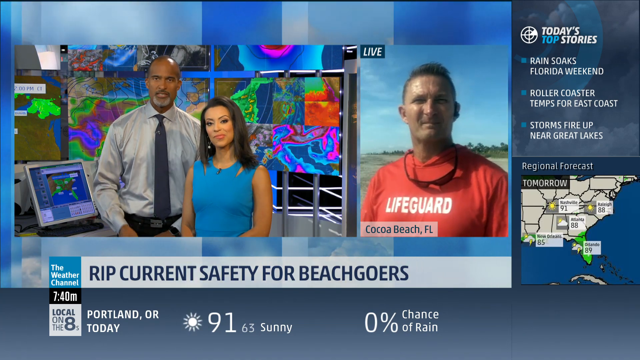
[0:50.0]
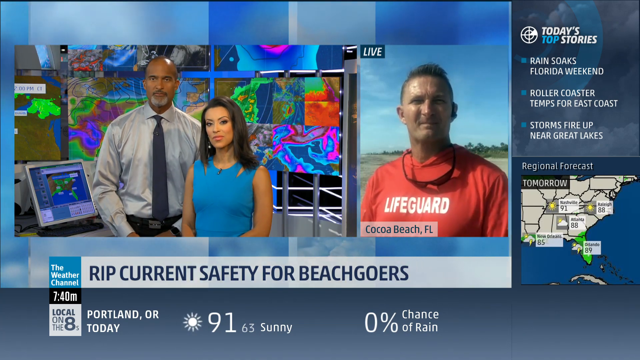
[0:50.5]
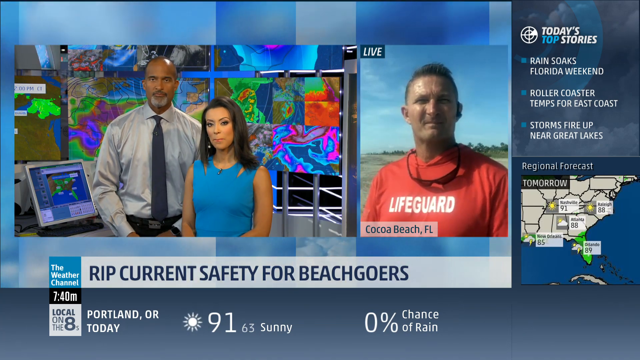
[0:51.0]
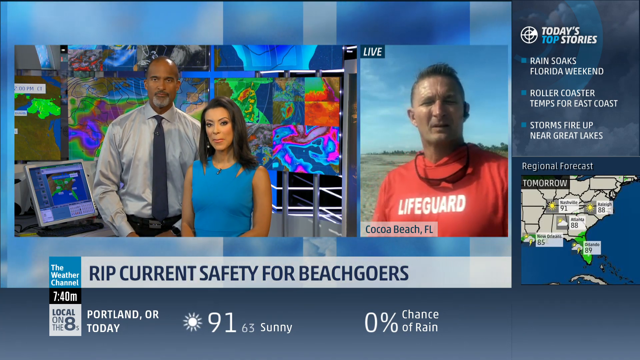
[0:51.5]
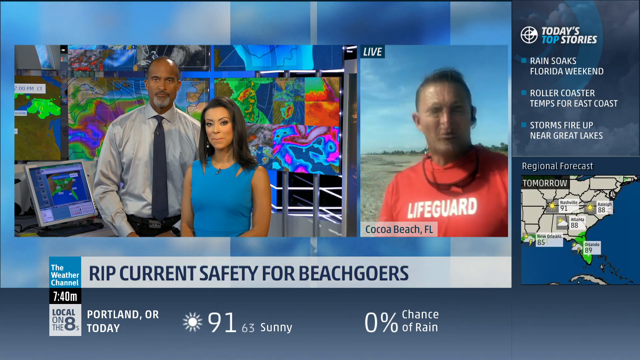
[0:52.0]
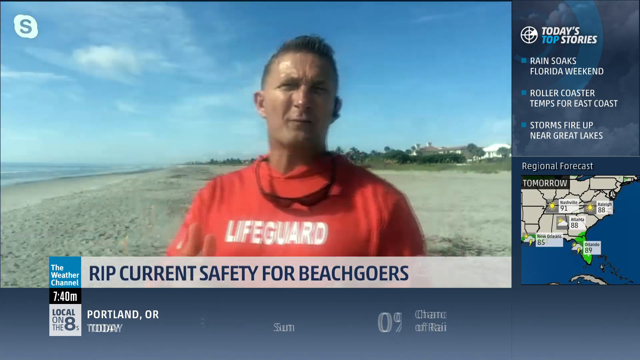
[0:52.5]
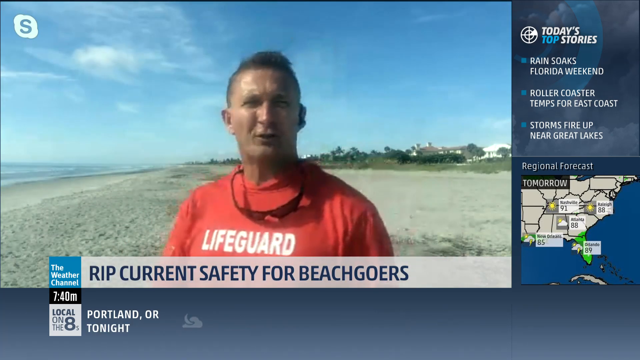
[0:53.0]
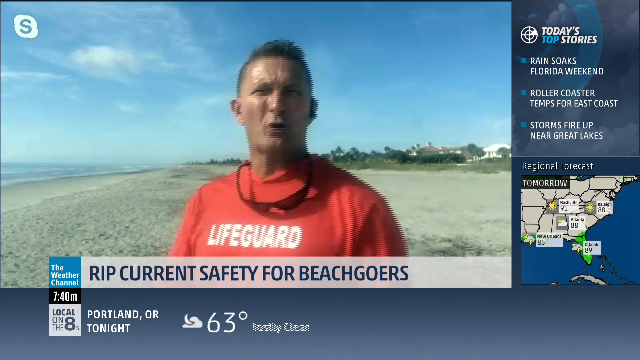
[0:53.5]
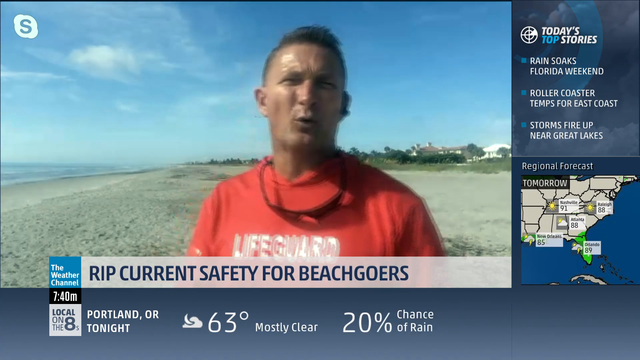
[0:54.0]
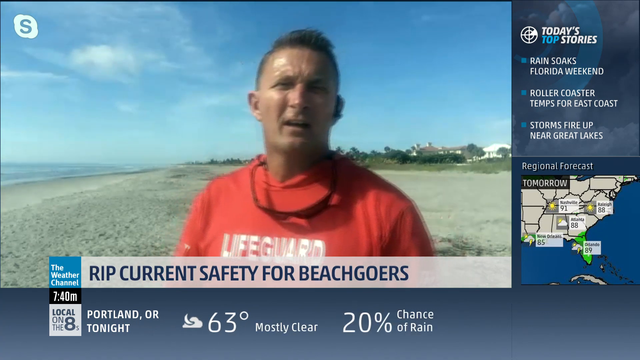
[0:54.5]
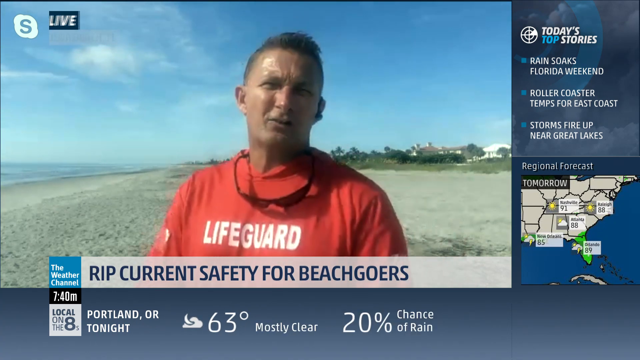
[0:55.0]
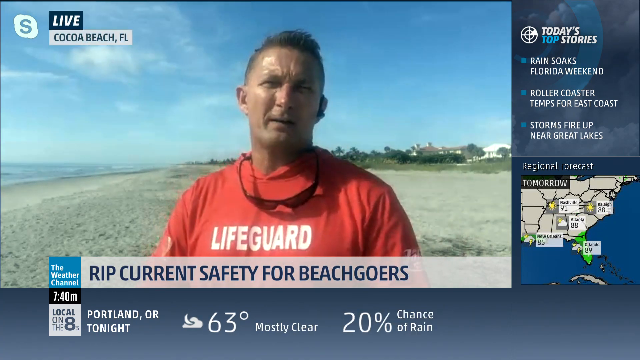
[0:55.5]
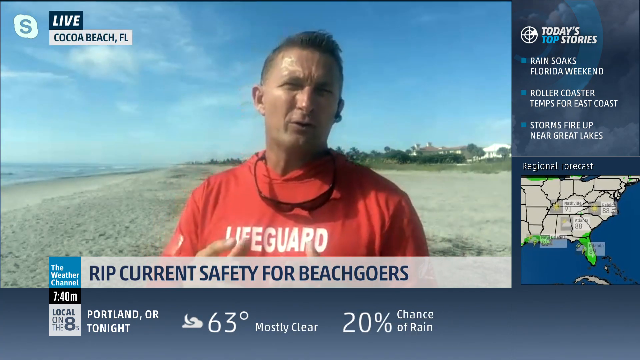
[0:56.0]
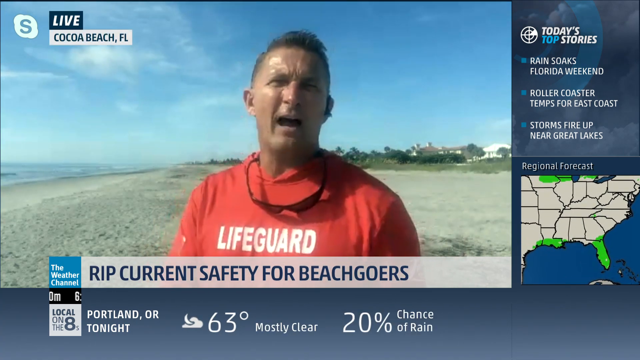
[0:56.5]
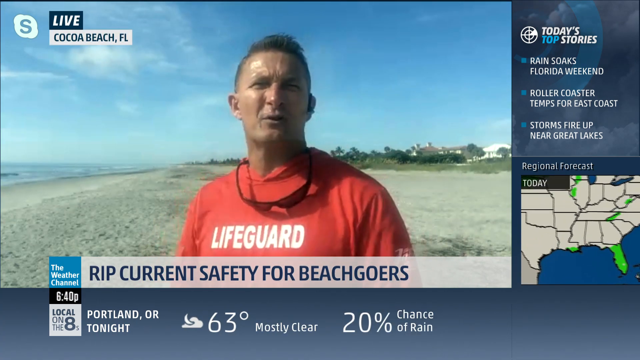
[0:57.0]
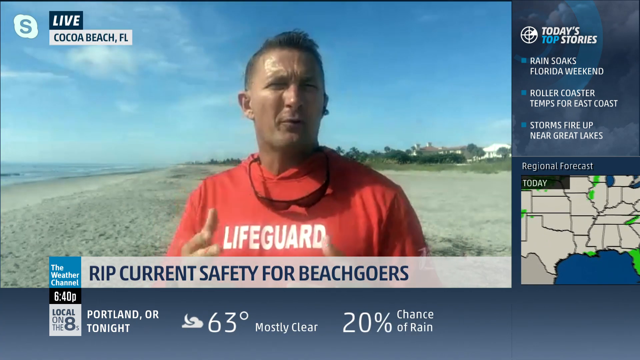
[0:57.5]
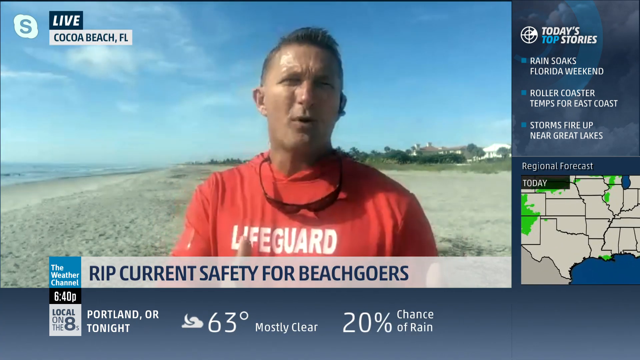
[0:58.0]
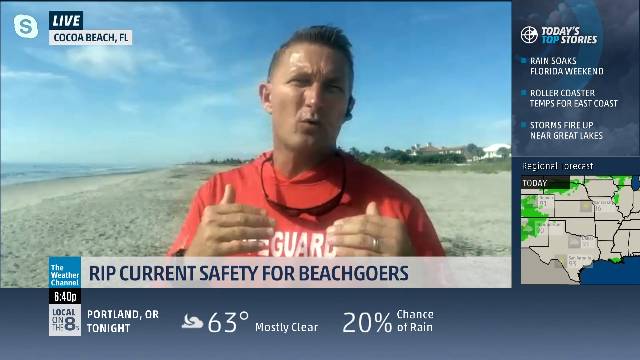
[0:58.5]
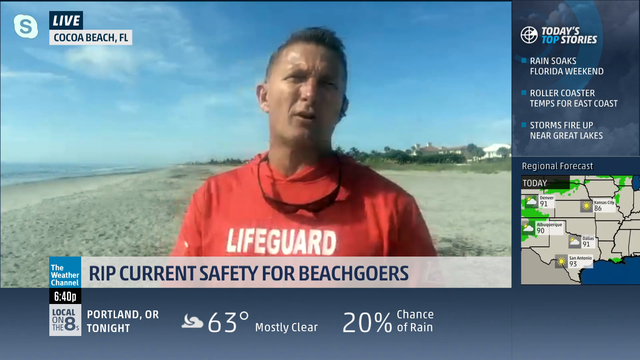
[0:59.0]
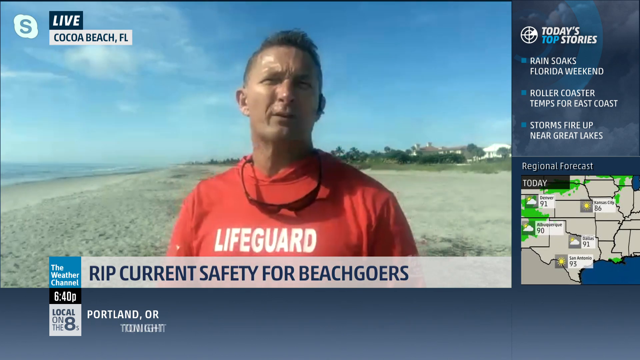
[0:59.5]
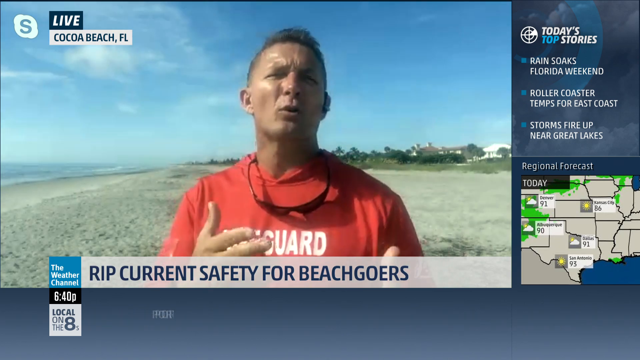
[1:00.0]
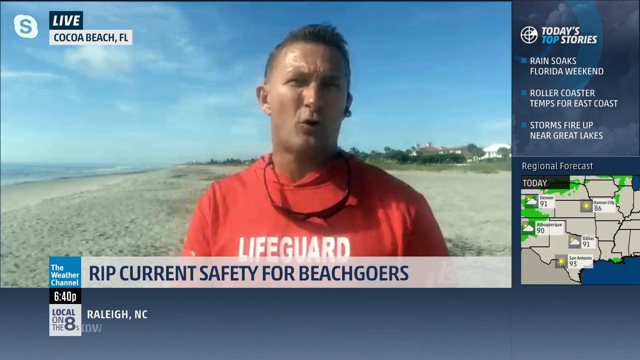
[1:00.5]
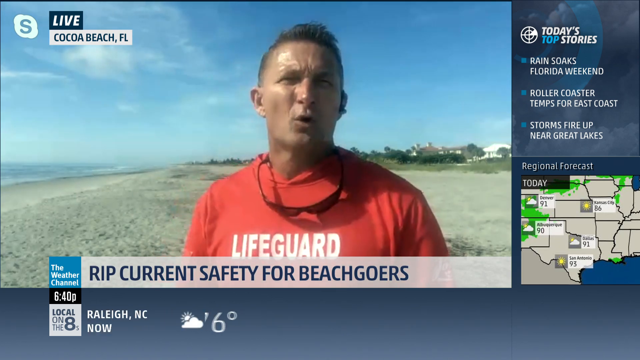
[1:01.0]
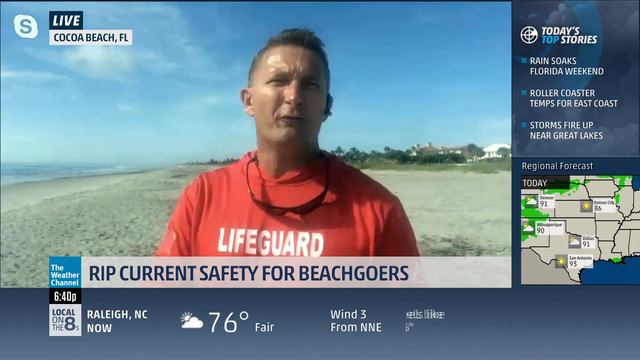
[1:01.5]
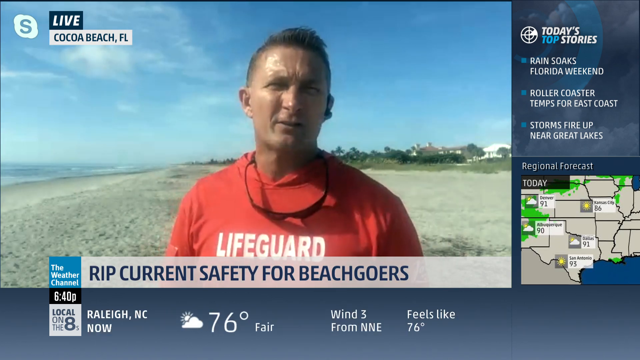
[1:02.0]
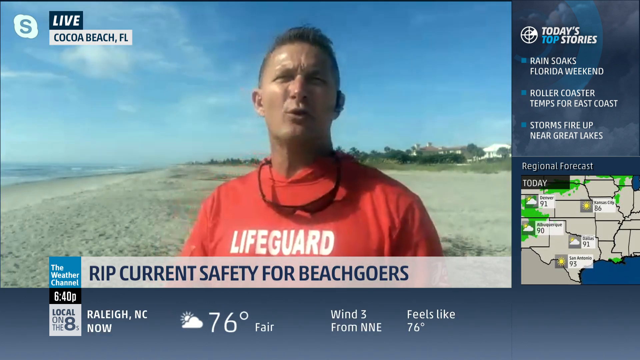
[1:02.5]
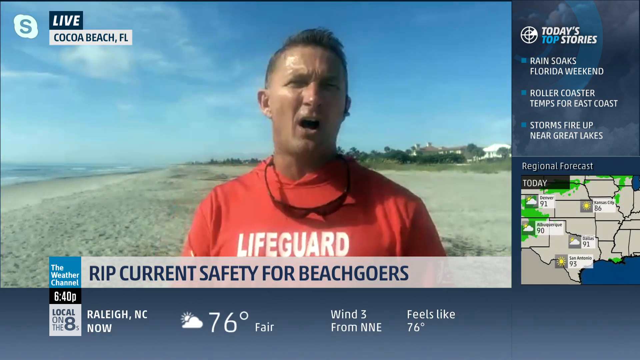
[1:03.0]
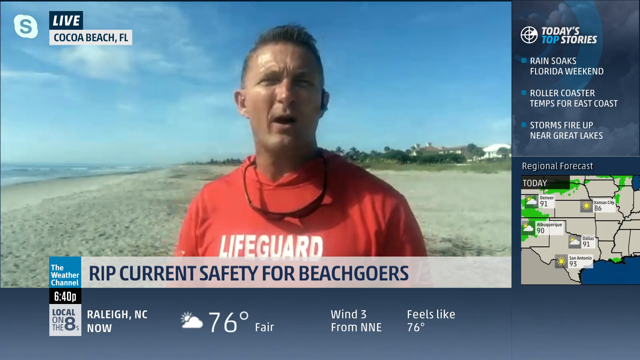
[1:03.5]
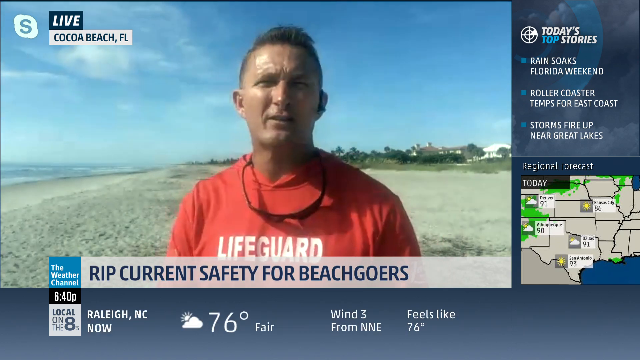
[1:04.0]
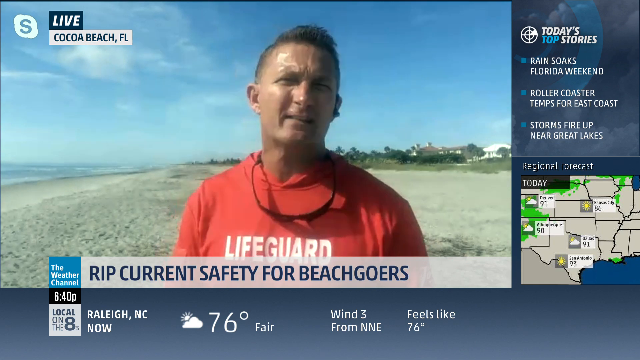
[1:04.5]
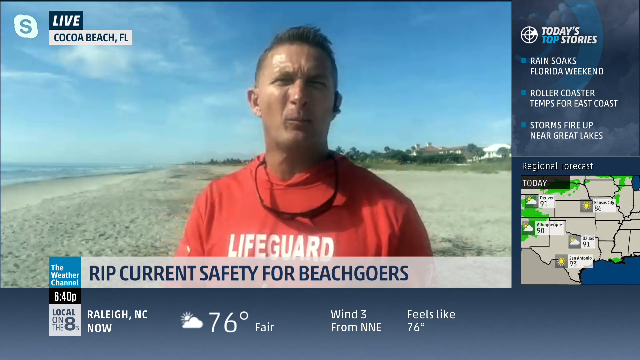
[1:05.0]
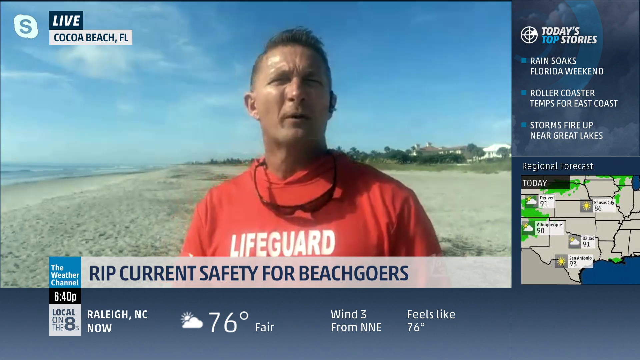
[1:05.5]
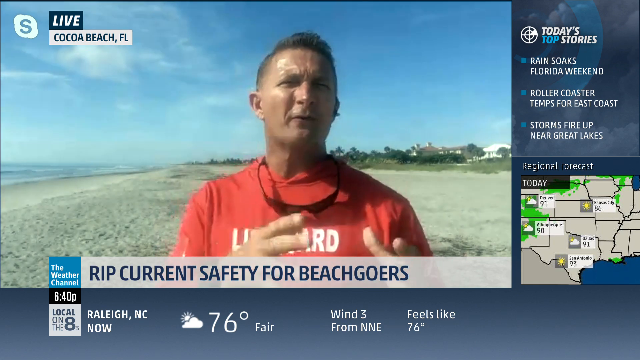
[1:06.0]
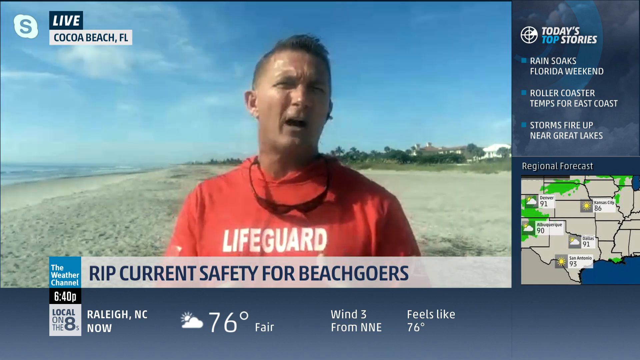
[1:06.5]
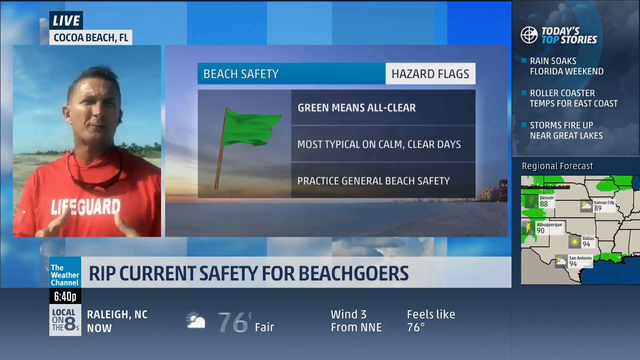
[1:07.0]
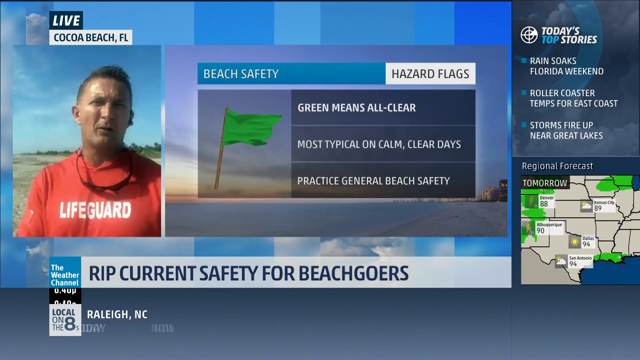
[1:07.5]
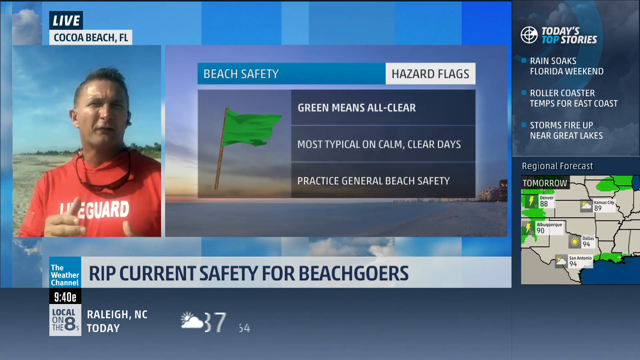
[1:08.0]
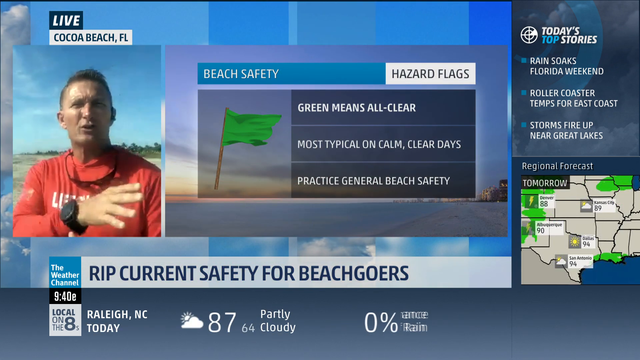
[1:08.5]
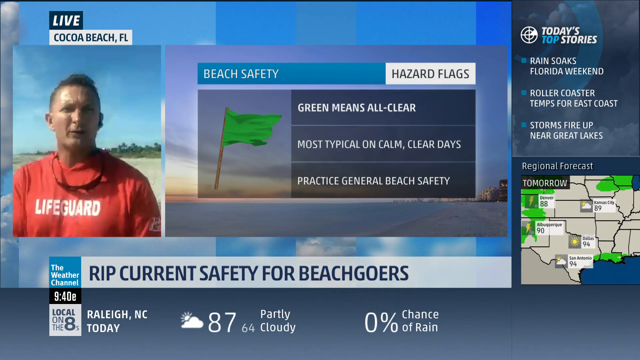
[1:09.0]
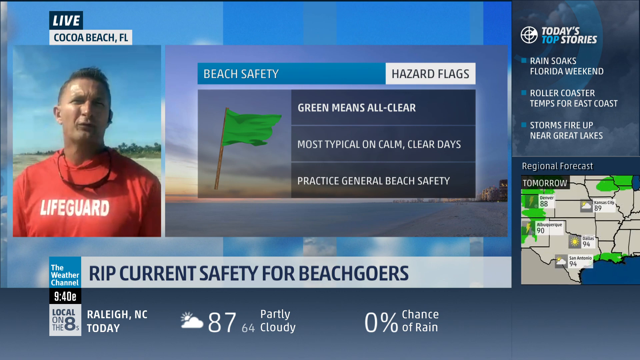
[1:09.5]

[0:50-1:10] A lifeguard on location, live from Cocoa Beach, Florida, talks to the camera about rip current safety for beachgoers. Beach safety hazard flags are shown: green reads "all clear," "most typical on calm, clear days," and "practice general beach safety"; then yellow appears as a warning for beach conditions. At the bottom is the Raleigh, North Carolina weather: 76 degrees and fair, wind 3 from north to northeast, feels like 76 degrees. On the right side the text reads "today's top stories": "Rain soaks Florida weekend," "Rollercoaster temps for East Coast," and below that "Storms fire up near Great Lakes."